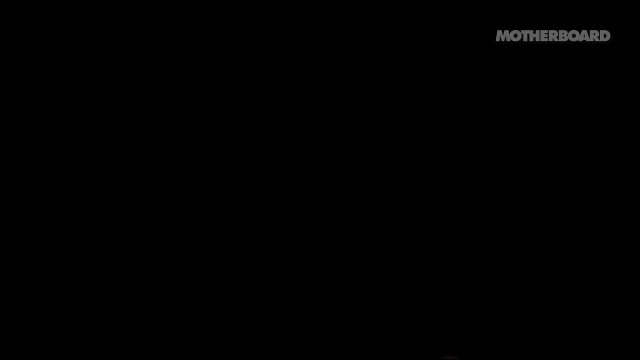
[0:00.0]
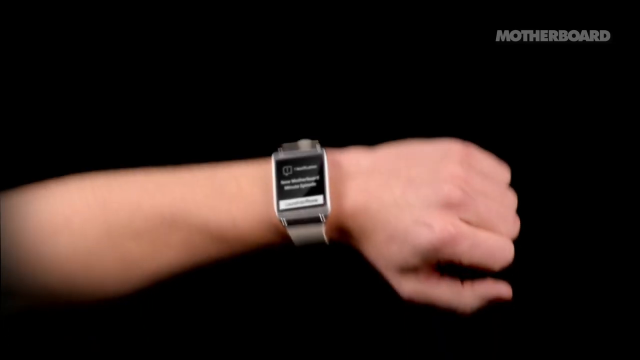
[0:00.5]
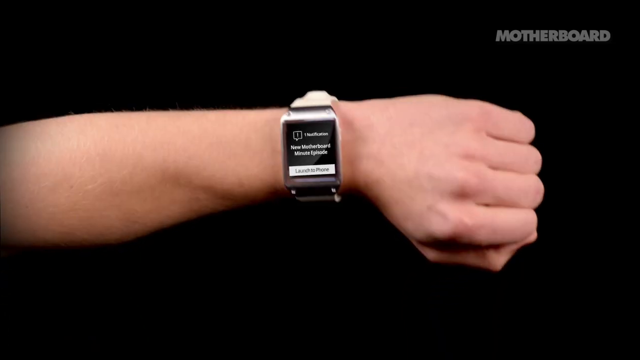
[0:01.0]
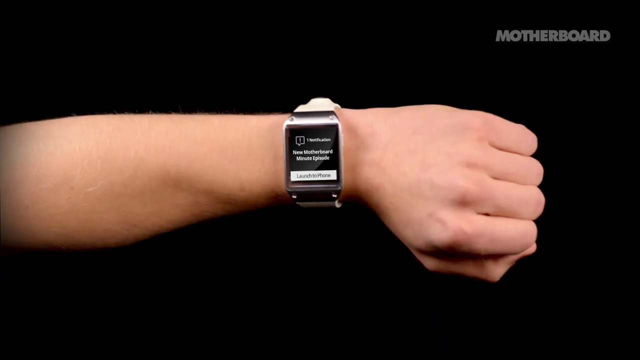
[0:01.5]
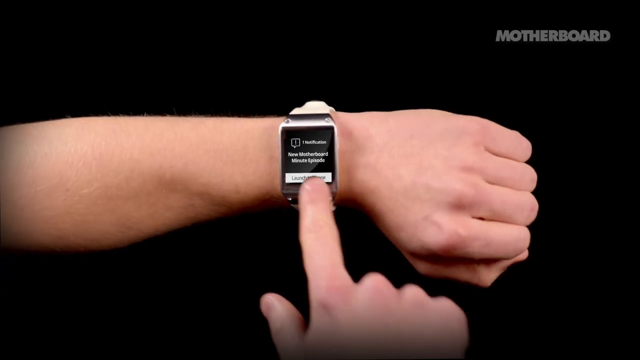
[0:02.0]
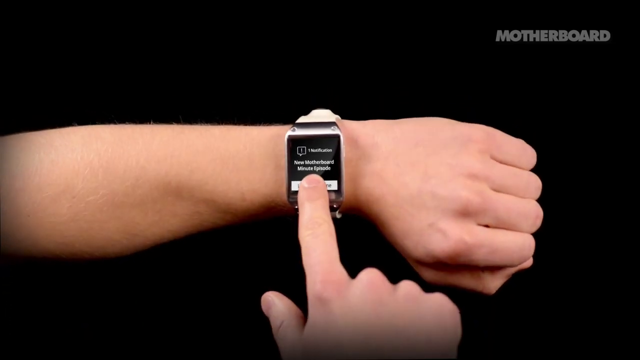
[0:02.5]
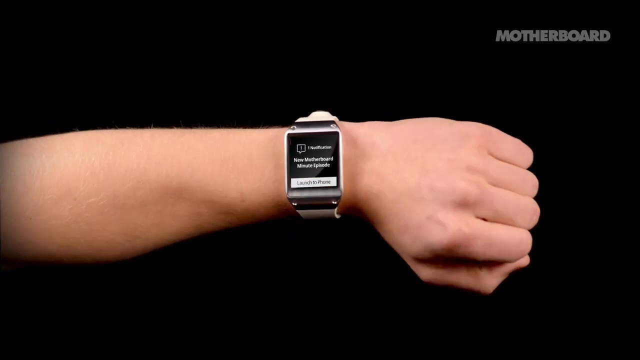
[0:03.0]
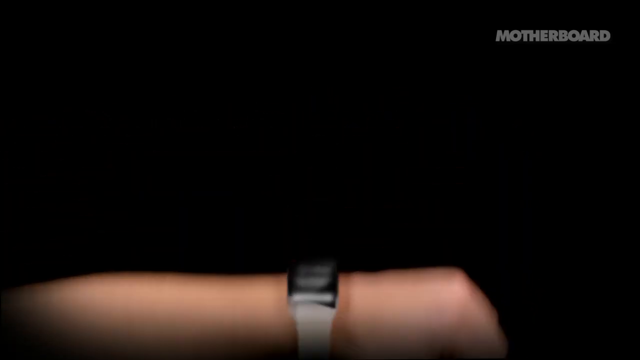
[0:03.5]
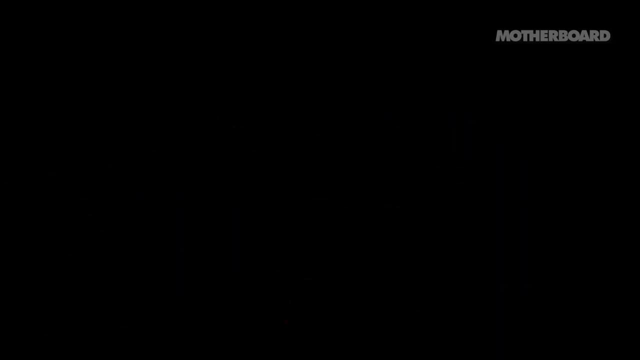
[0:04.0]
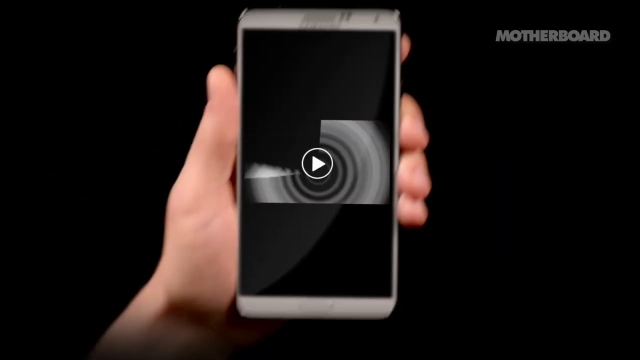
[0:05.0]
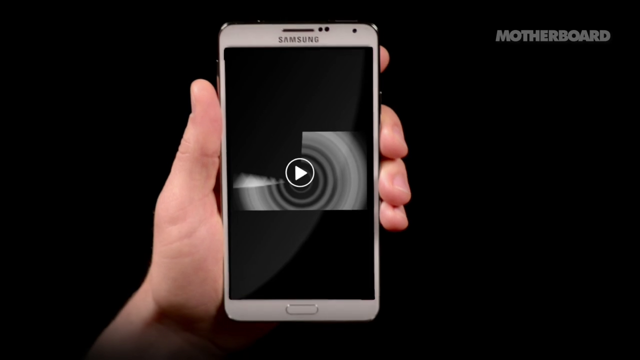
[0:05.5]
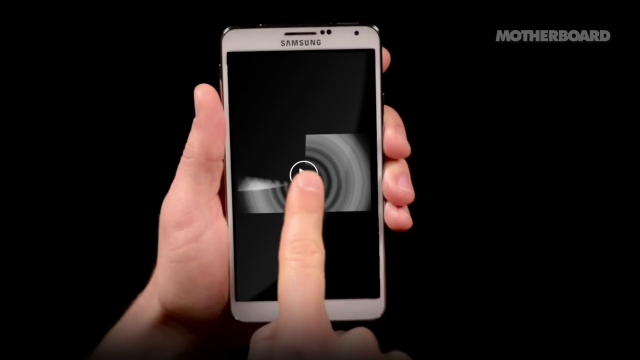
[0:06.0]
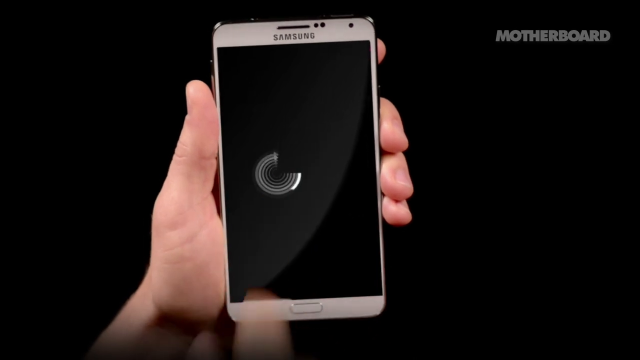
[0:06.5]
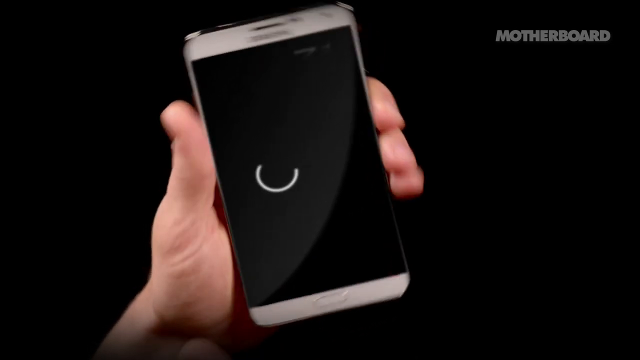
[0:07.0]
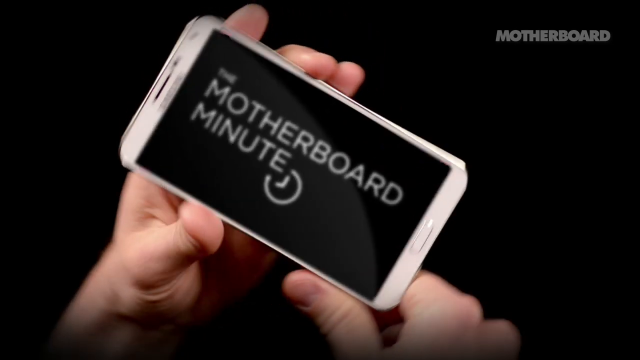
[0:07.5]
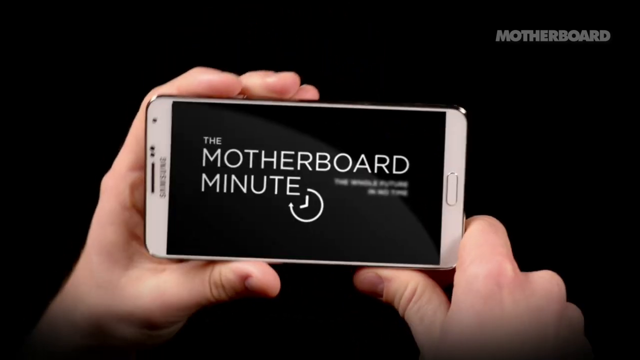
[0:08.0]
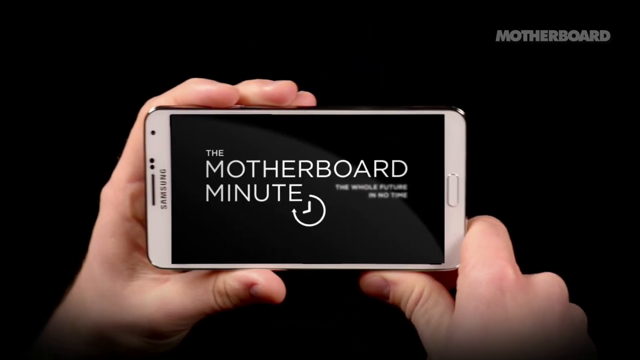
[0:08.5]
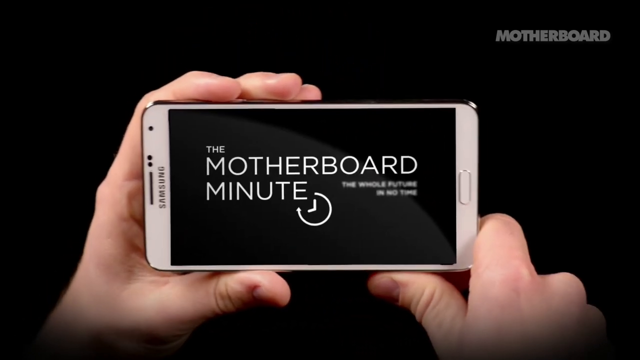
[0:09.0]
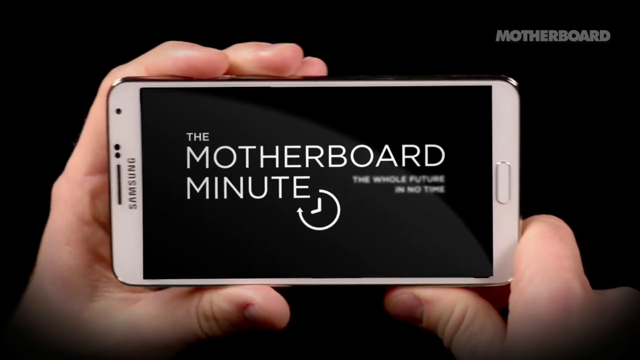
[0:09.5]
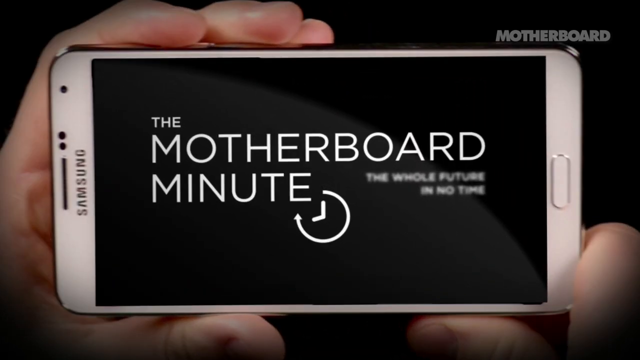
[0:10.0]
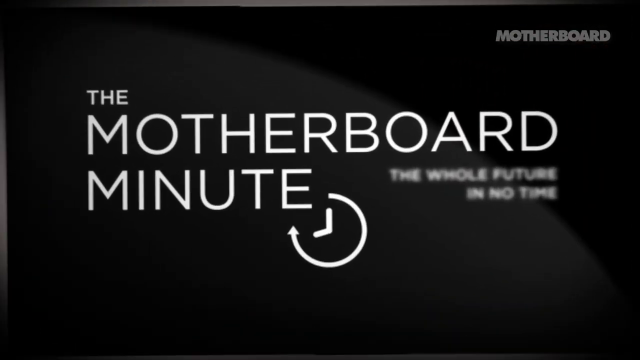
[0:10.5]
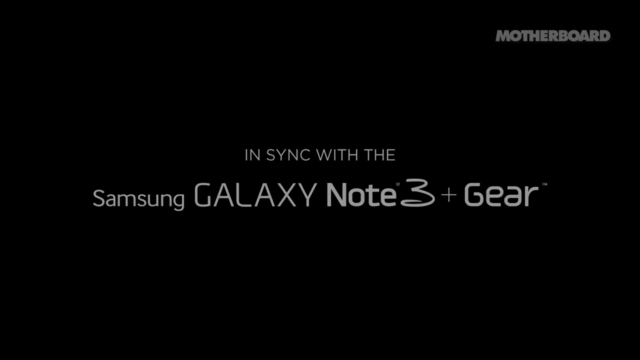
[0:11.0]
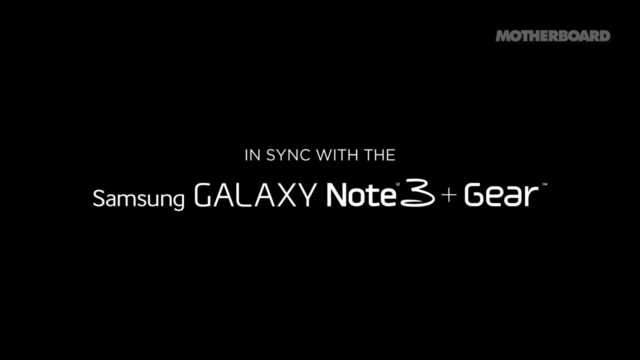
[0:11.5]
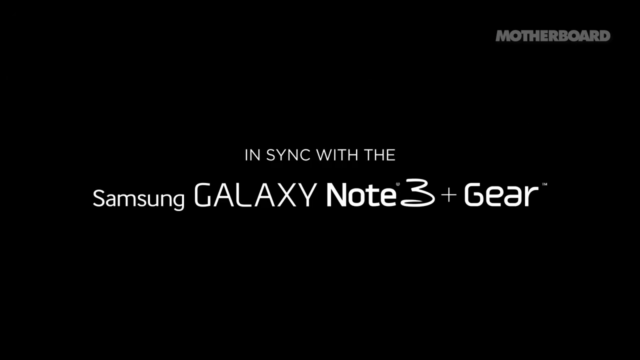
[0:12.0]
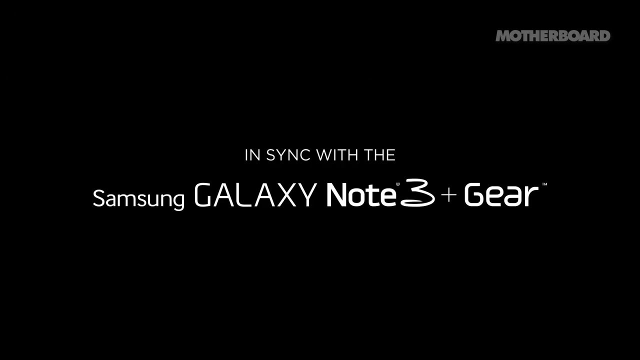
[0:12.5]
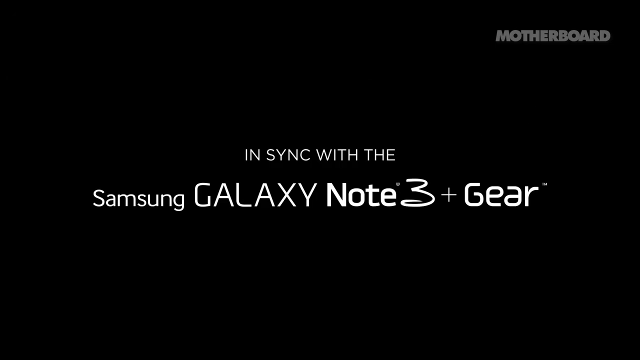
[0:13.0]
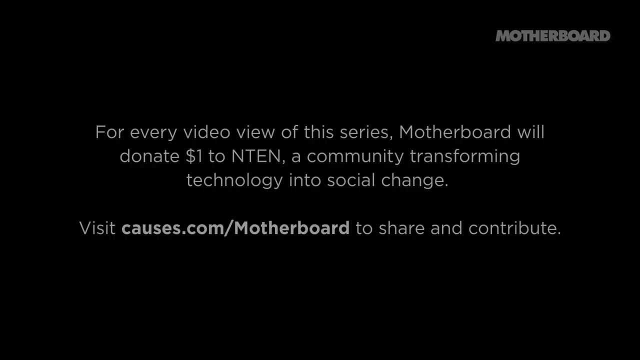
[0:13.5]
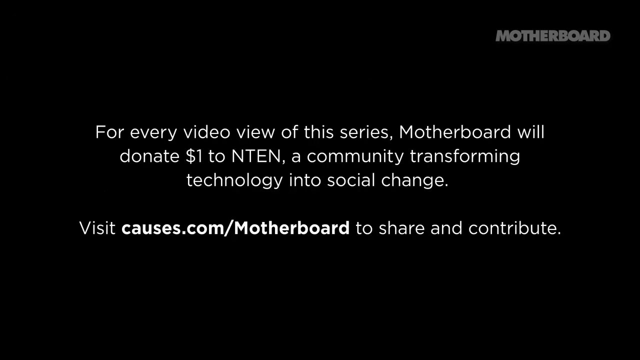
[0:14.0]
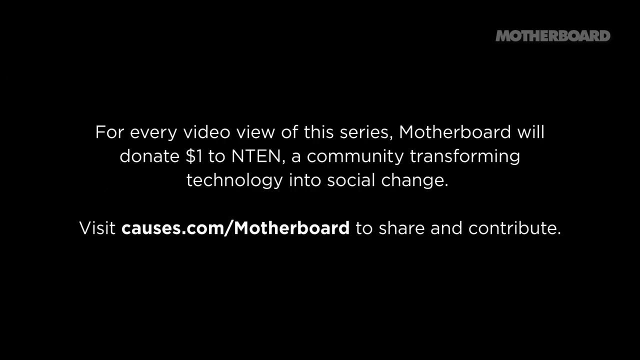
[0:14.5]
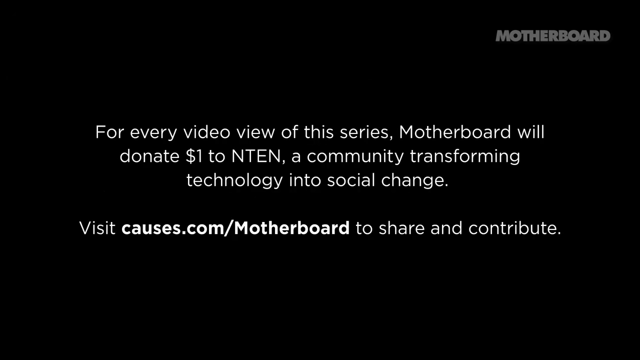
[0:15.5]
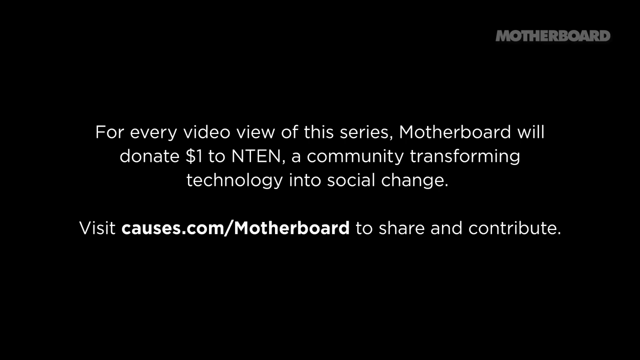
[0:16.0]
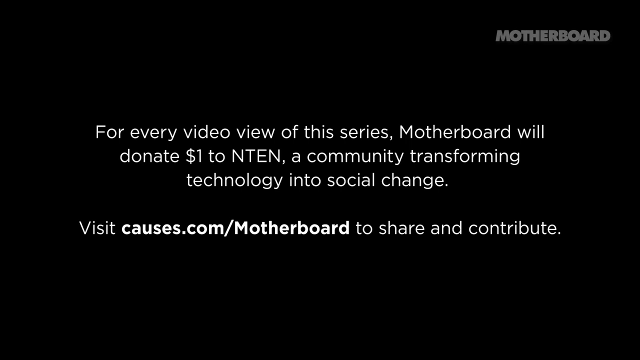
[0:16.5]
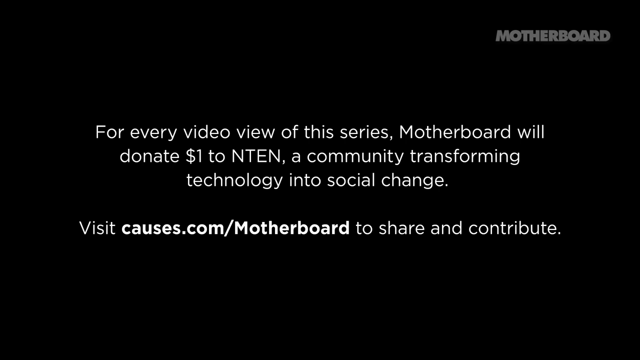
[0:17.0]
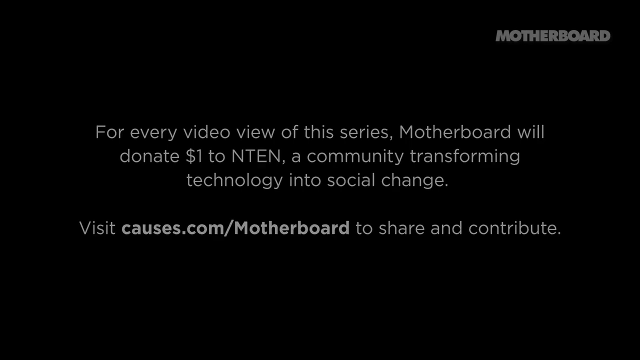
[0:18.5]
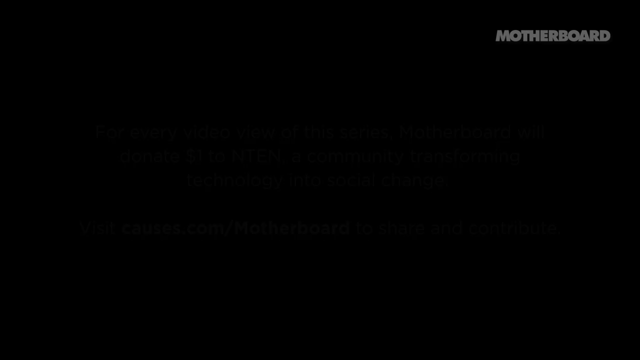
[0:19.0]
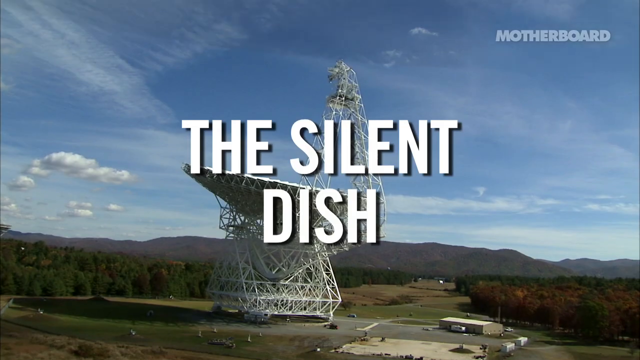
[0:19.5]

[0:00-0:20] The video opens with a message, and the word "motherboard" appears in the upper right corner of the screen. After the message, a man's hand and wrist are shown; he wears a watch with a square frame. Next comes a Samsung smartphone, held in the man's hands, and he presses a button on its screen. A message then pops up reading "The motherboard minutes in sync with Samsung Galaxy Note 3," along with another message showing a website. Next, a satellite tower appears on screen with "The silent dish" written across it.